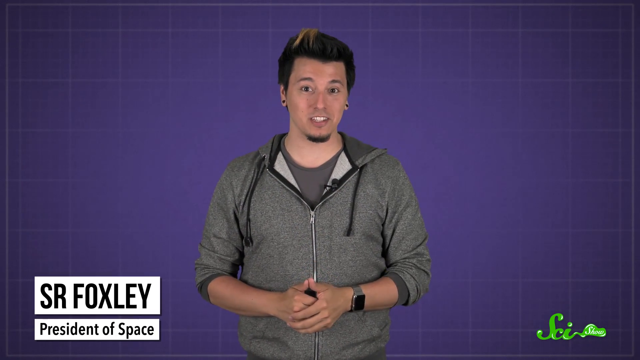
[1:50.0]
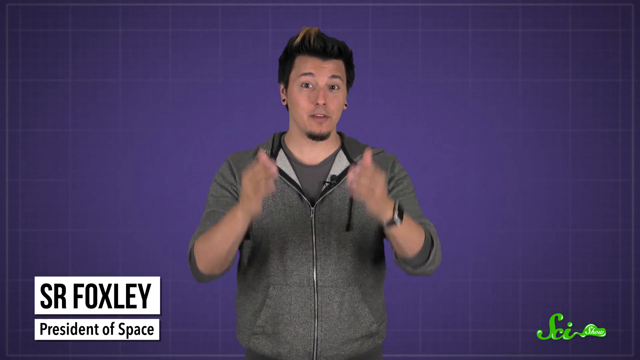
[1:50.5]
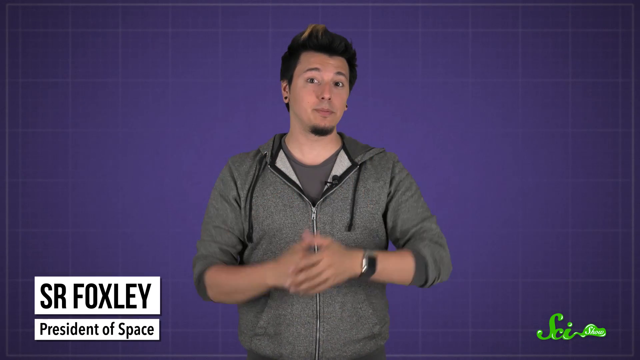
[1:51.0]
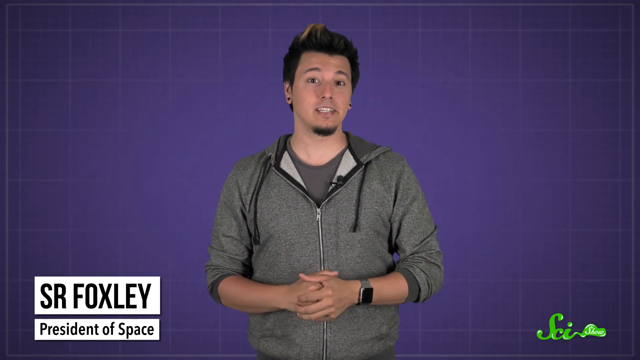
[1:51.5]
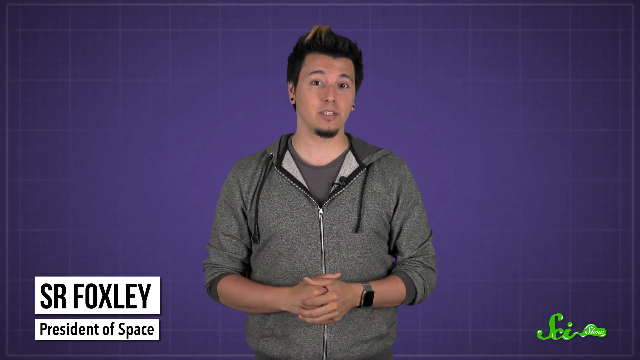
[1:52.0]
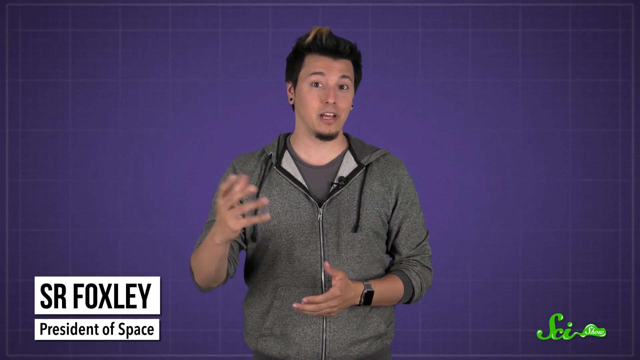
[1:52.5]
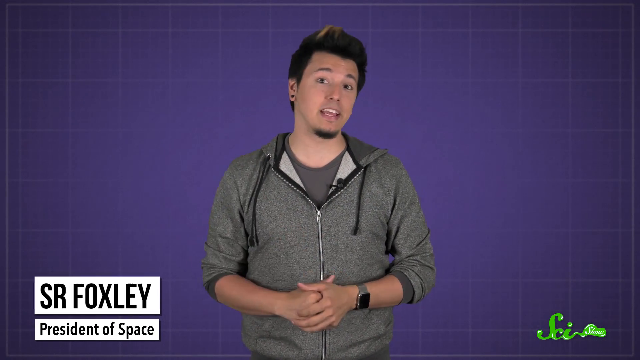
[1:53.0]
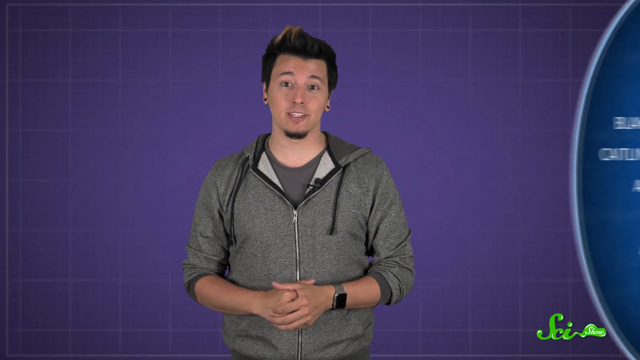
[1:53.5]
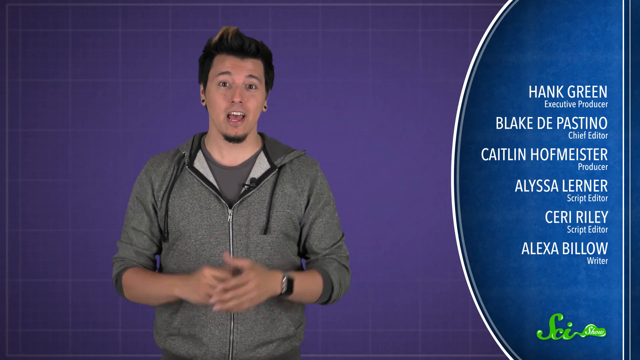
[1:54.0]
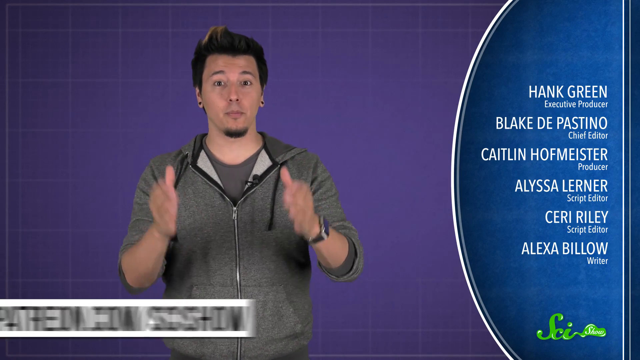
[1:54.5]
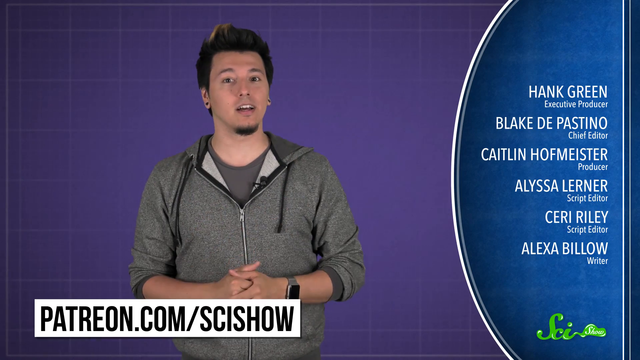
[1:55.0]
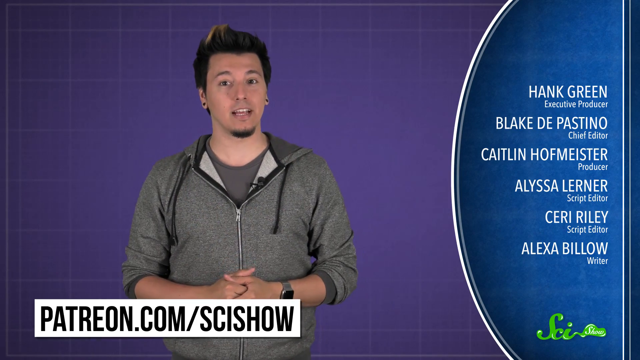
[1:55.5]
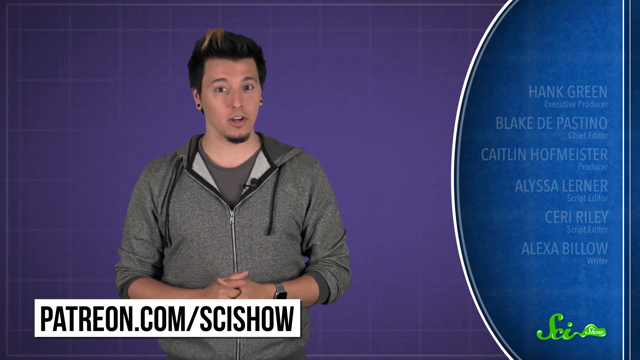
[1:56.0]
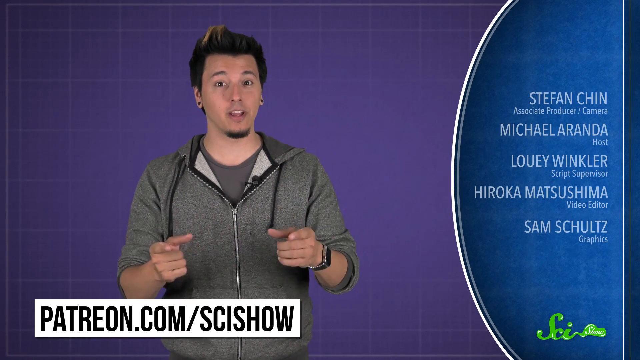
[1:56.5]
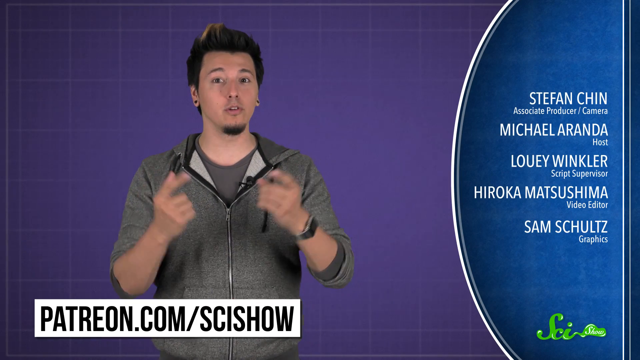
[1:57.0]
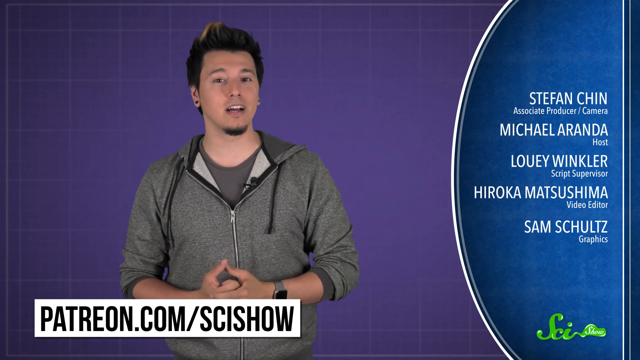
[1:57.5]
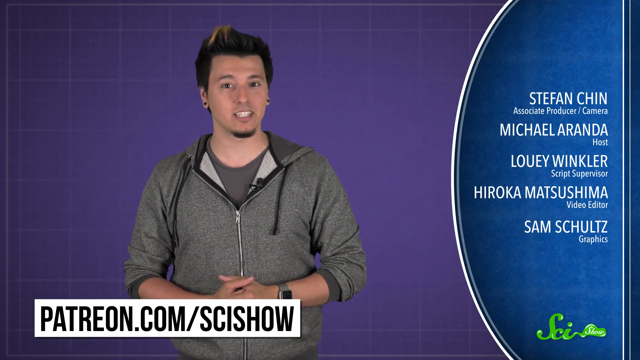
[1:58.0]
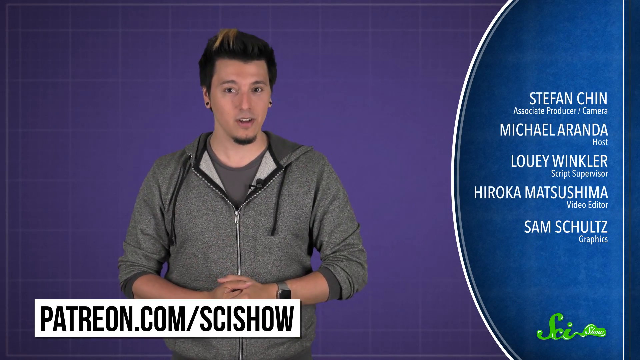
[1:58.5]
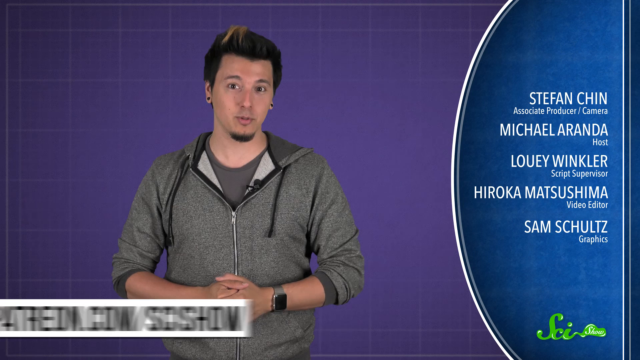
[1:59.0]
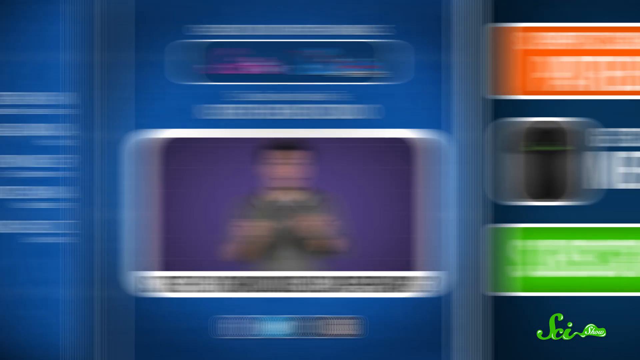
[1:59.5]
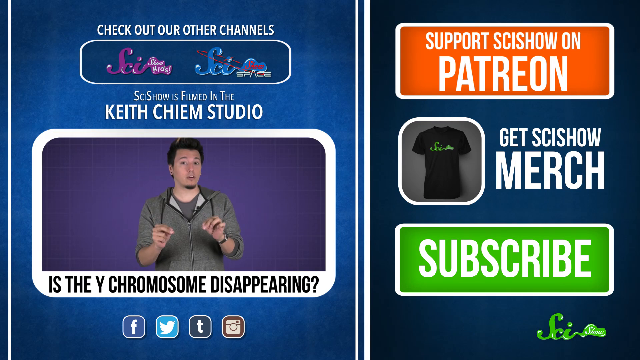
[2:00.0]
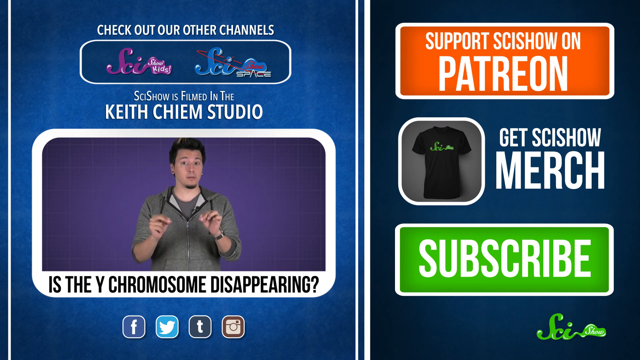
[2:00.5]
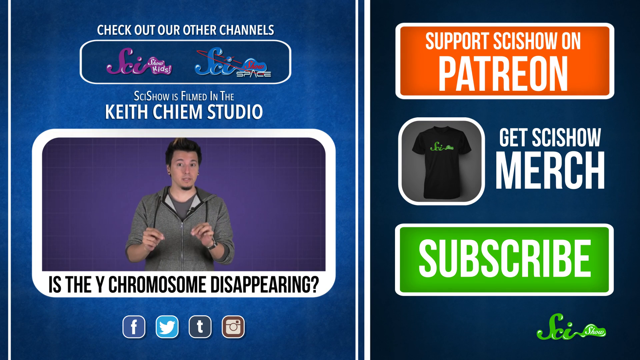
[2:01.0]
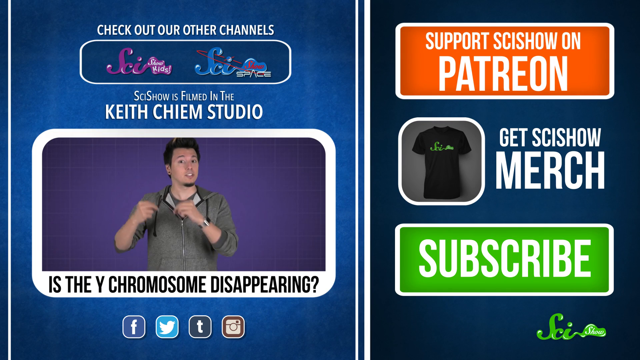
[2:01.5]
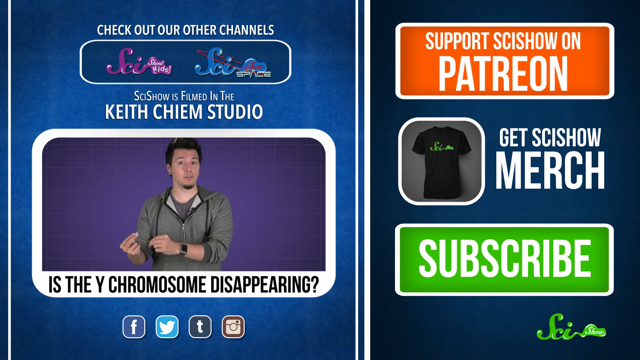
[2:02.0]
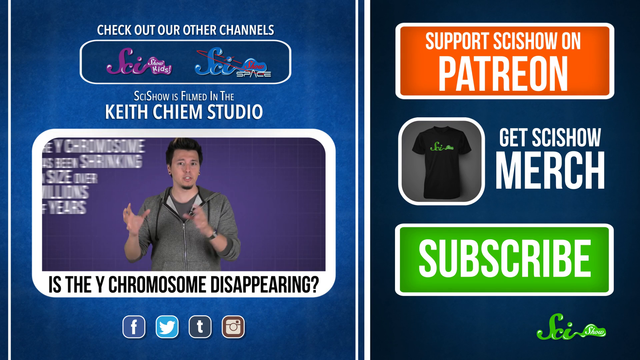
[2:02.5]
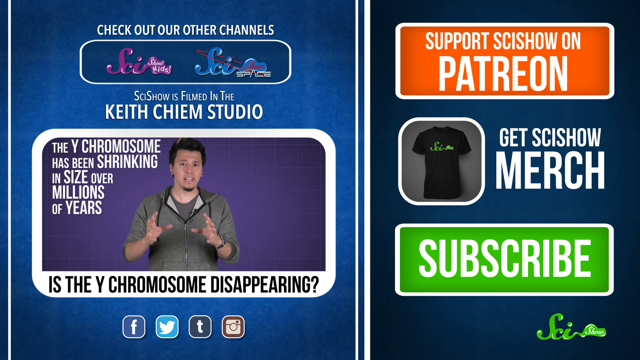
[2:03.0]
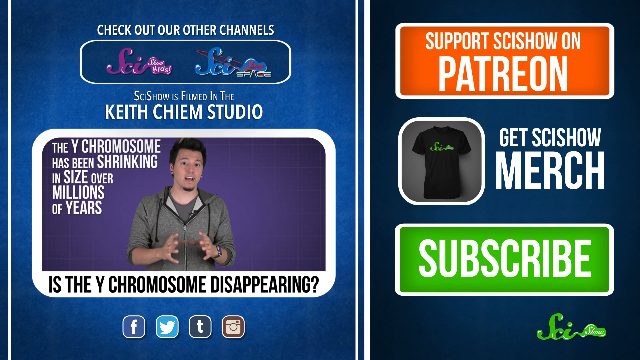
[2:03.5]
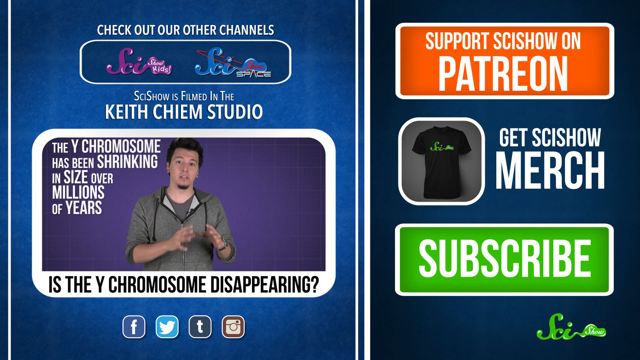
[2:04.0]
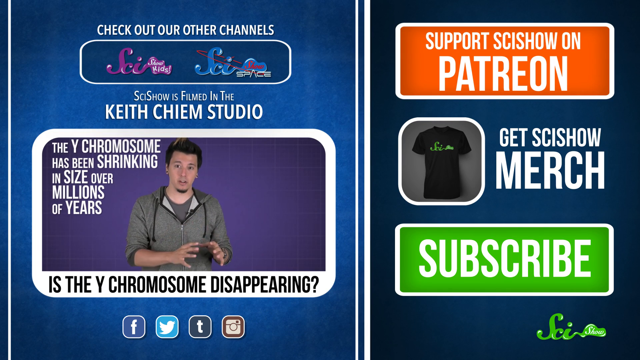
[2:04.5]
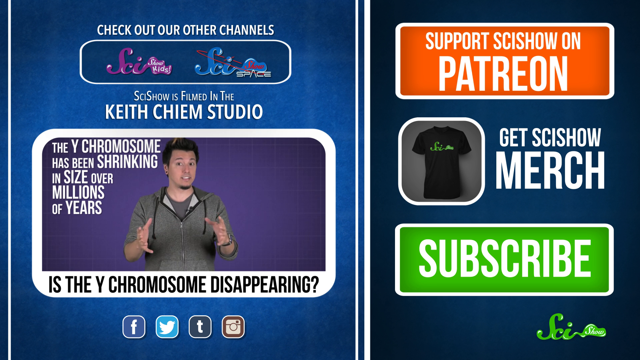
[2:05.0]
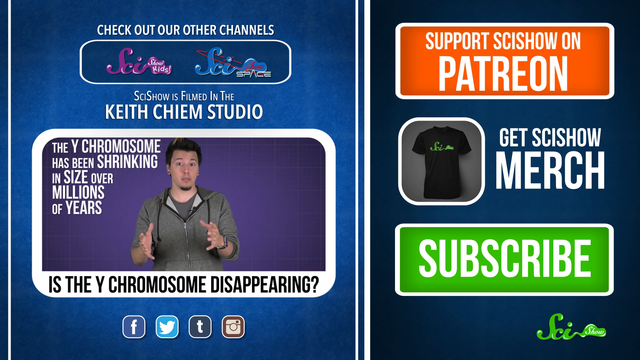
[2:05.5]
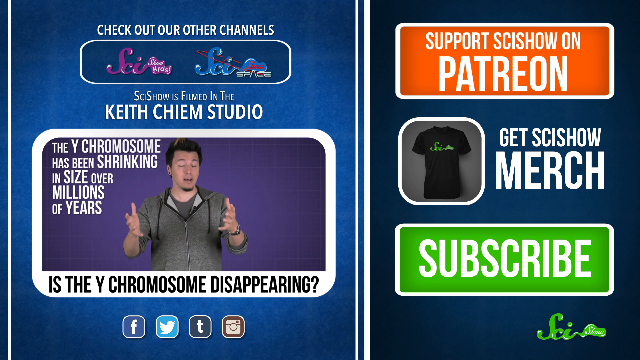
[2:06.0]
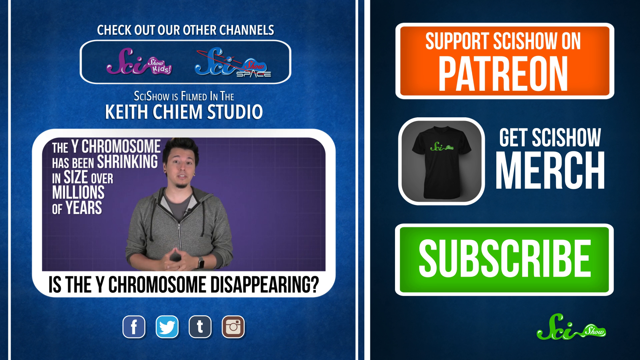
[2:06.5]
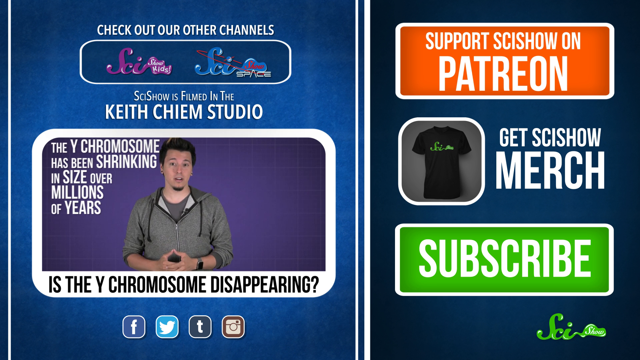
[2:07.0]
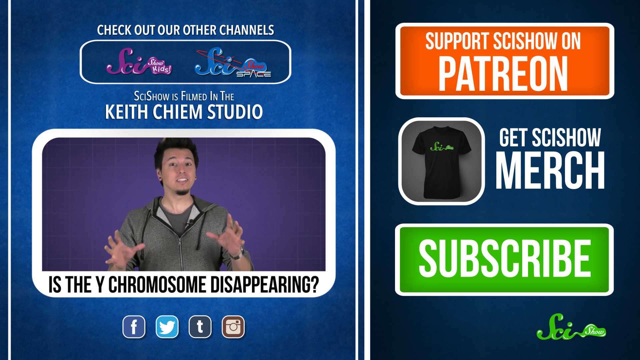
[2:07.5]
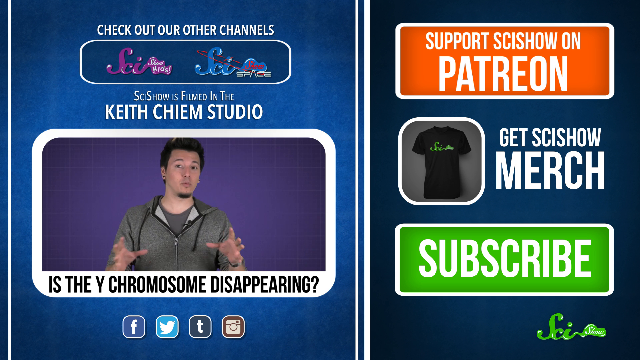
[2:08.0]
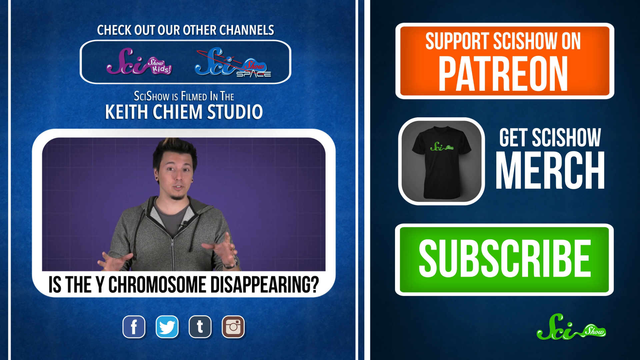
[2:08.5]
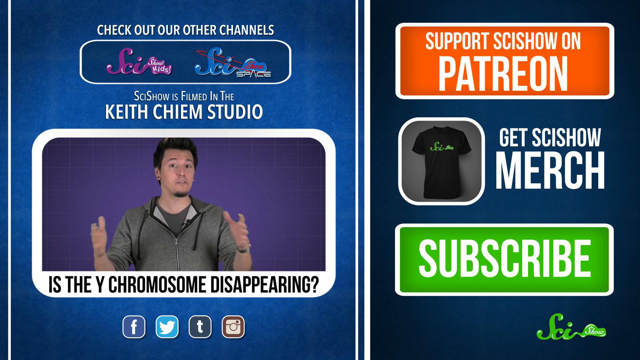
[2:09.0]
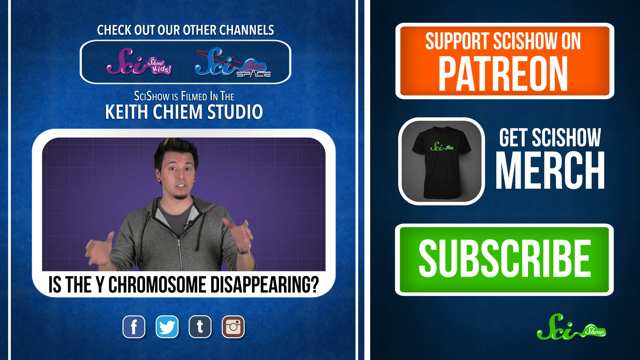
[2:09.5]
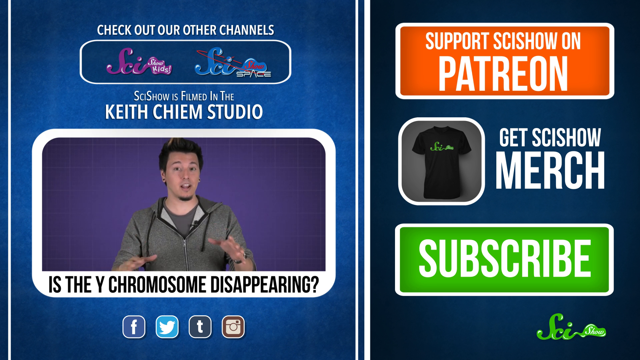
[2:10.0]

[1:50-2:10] The man stands in front of the blue background, and "Senior Foxley, President of Space" appears on the lower left-hand side of the video in black lettering on a white box. The green SciShow logo is in the right-hand corner, and he still wears the gray hoodie and gray shirt. "patreon.com/scishow" pops up at the bottom, also in black lettering on a white background. On the right-hand side, end credits appear with the names and positions of the people being credited, all in white lettering. The video then cuts to the outro: on the right, "support scishow on patreon" in white block lettering on an orange background; in the center, "get scishow merch" in white block lettering with a picture of a t-shirt on the left; below that, "subscribe" in white block lettering on a lime green background; and right below, in the center, social media buttons for Facebook, Twitter, TikTok and Instagram.